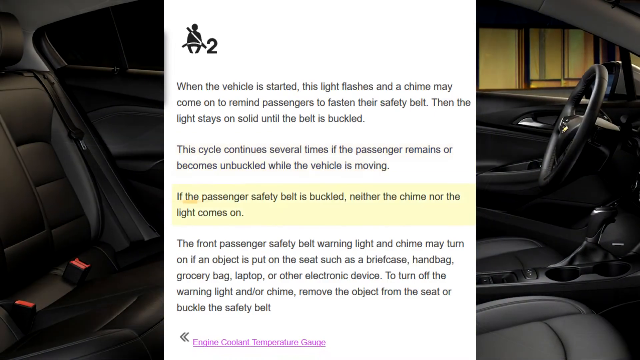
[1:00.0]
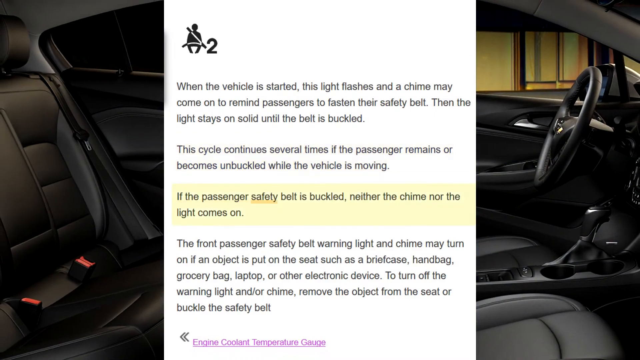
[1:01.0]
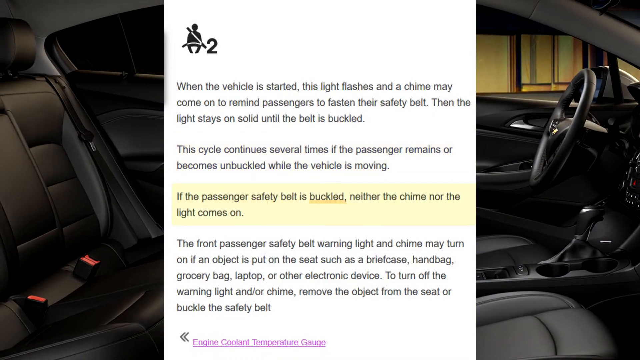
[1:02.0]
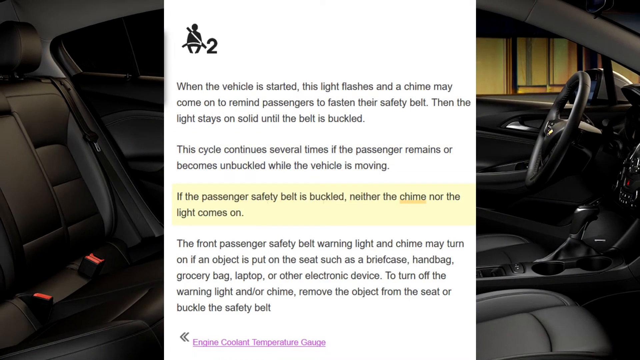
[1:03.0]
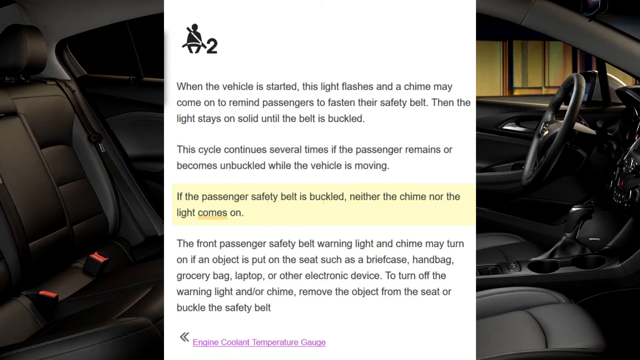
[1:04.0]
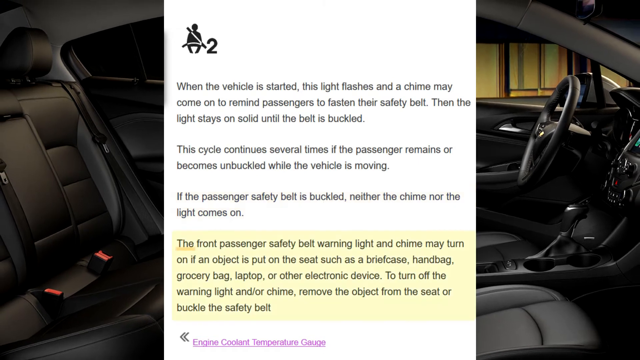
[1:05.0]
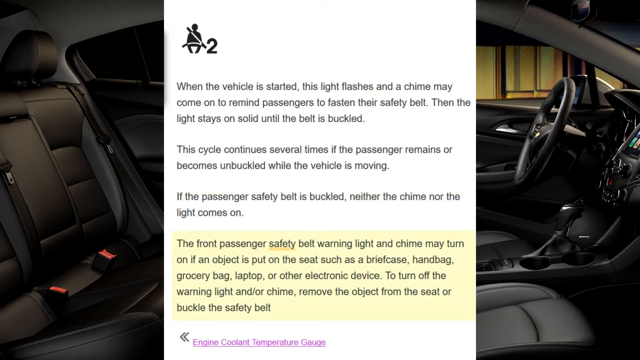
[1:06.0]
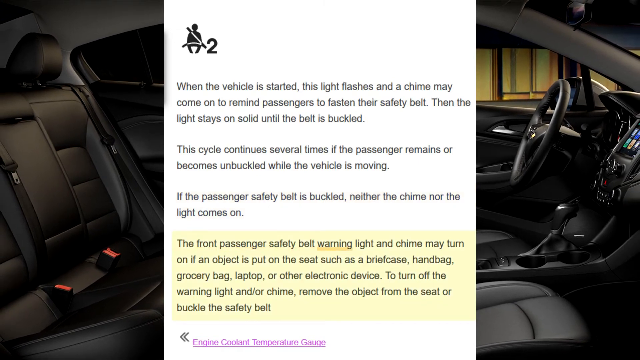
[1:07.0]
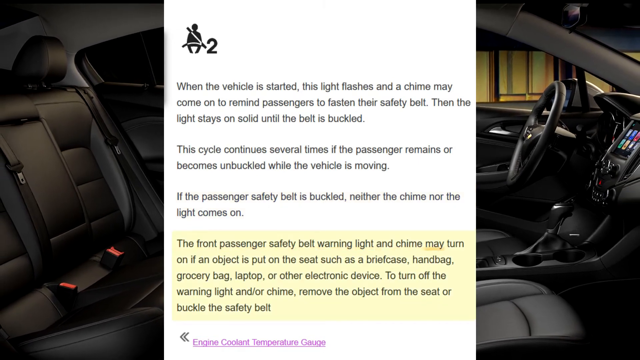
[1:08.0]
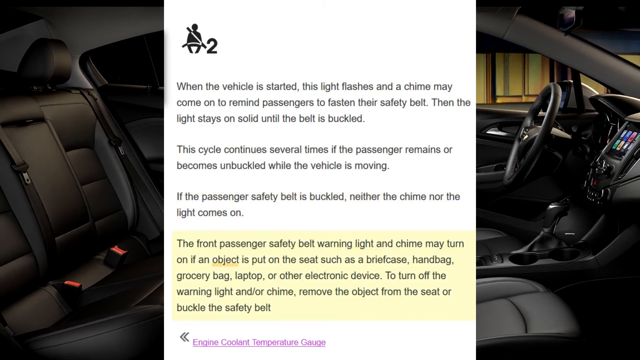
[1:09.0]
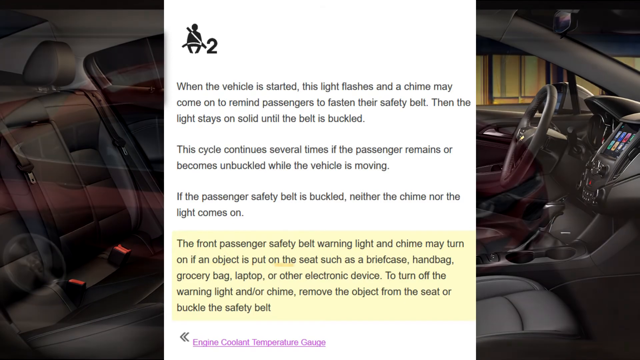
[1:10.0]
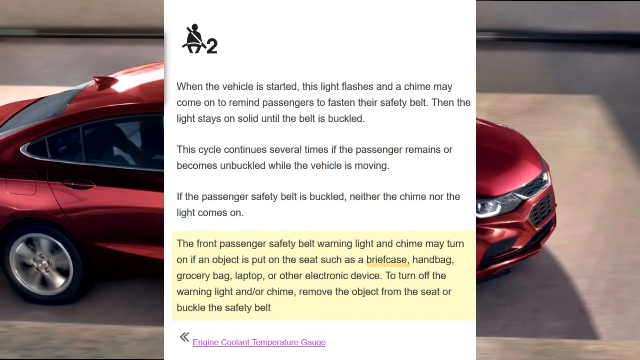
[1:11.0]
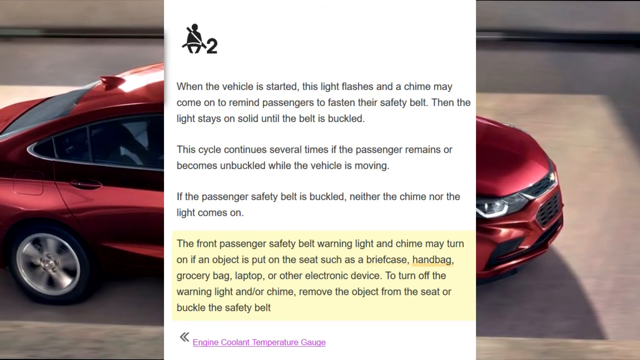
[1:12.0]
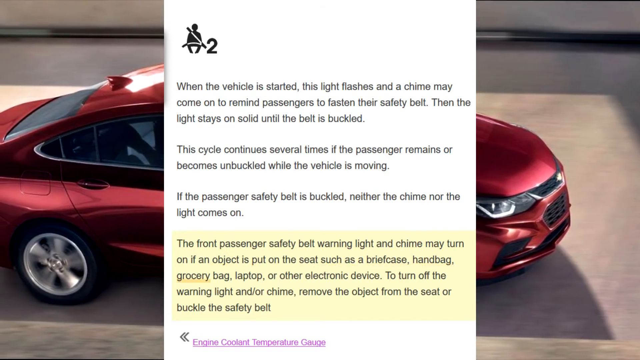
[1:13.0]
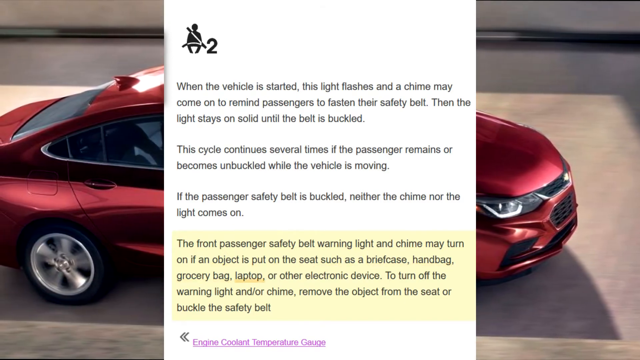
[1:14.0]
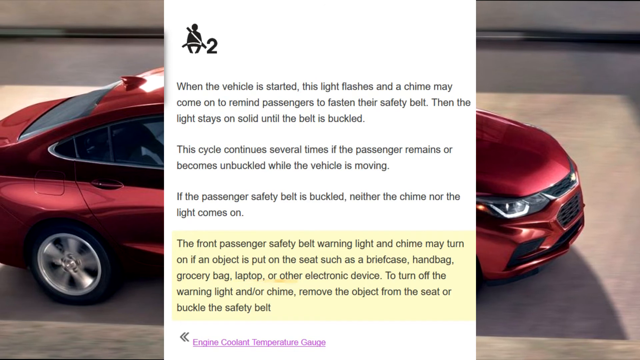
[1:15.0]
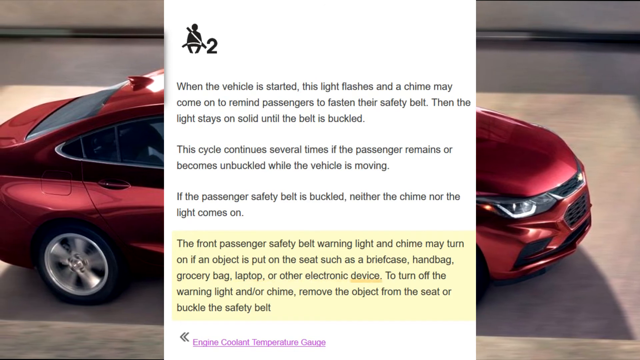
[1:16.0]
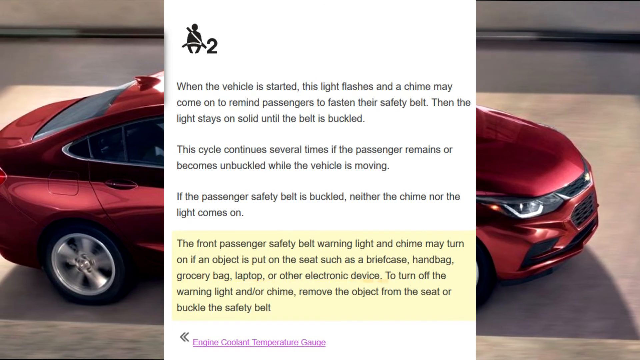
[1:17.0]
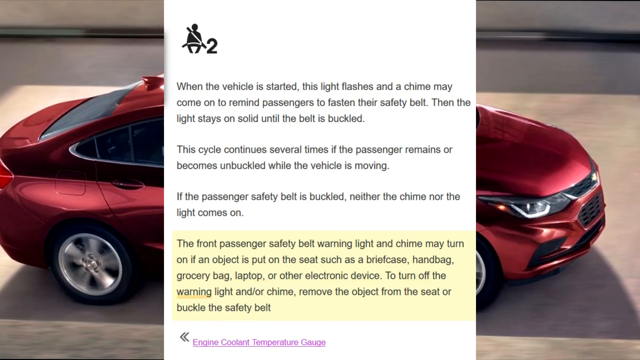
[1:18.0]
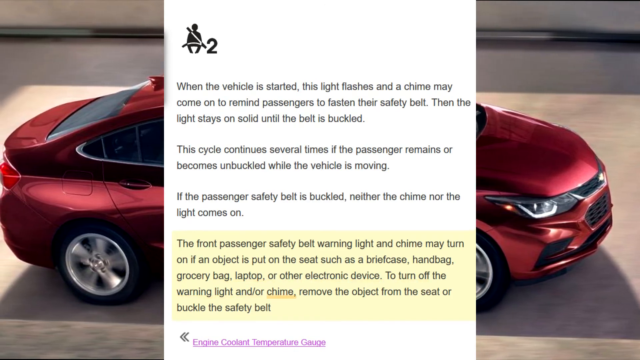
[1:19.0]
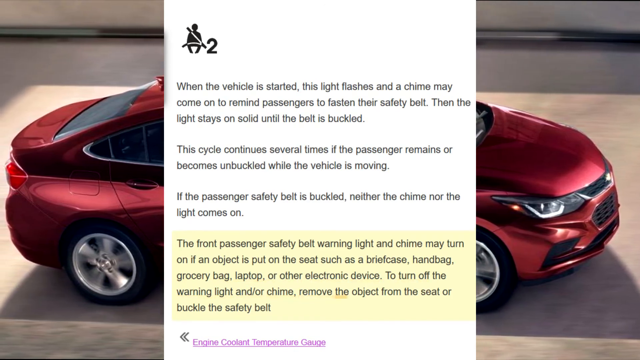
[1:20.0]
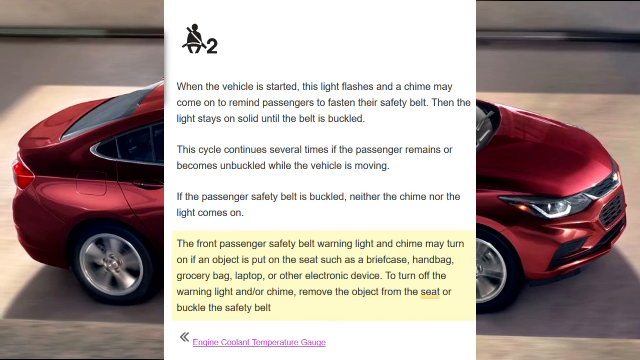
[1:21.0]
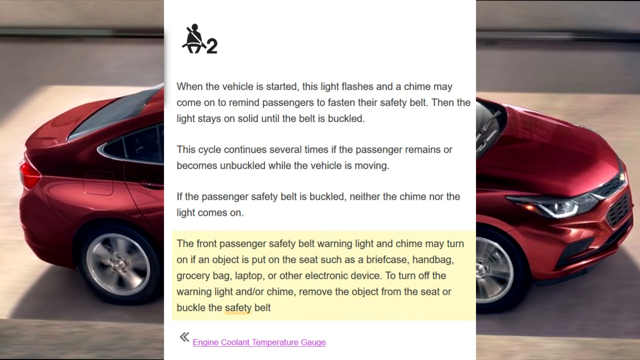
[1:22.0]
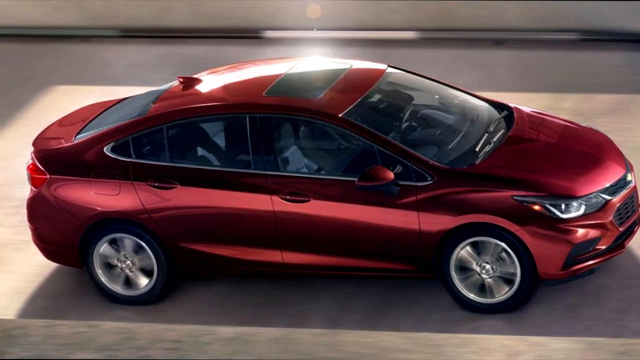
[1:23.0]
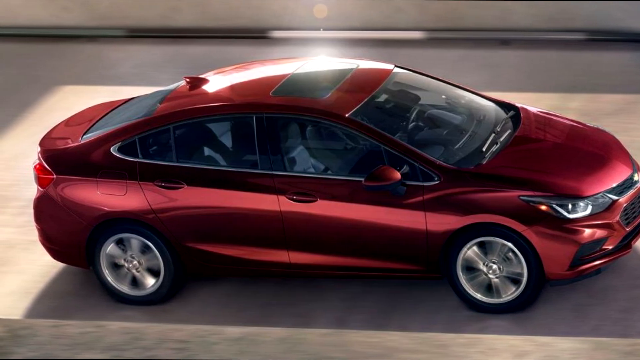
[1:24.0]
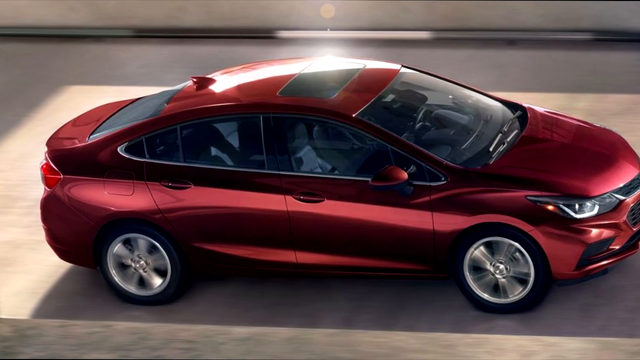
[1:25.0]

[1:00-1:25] A fourth paragraph below reads "the front passenger safety belt warning light and chime may turn on if an object is put on the seat, such as a briefcase, handbag, grocery bag, laptop, or other electronic device. To turn off the warning light and or chime, remove the object from the seat and or buckle the safety belt." A red car seen from a side view appears as the background, partially blocked by the white center panel with text. The camera slowly moves to the left until the end of the video. Toward the end, the white center panel disappears, and the whole car is visible from the side; it looks like it is parked on a pavement surface.